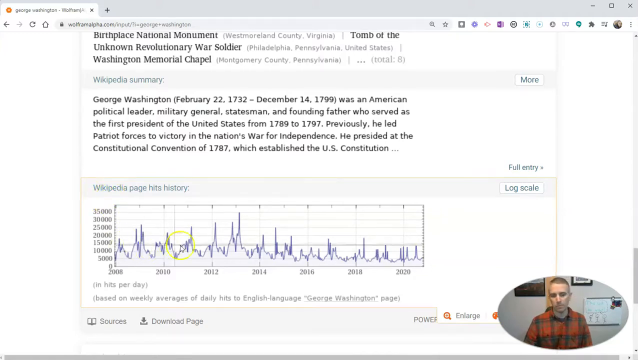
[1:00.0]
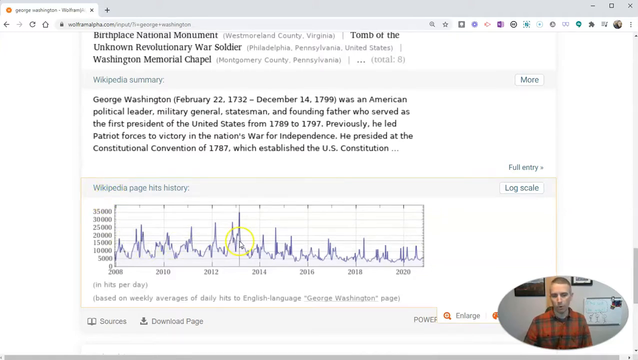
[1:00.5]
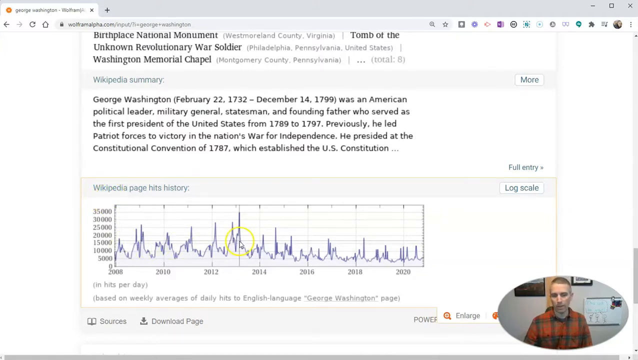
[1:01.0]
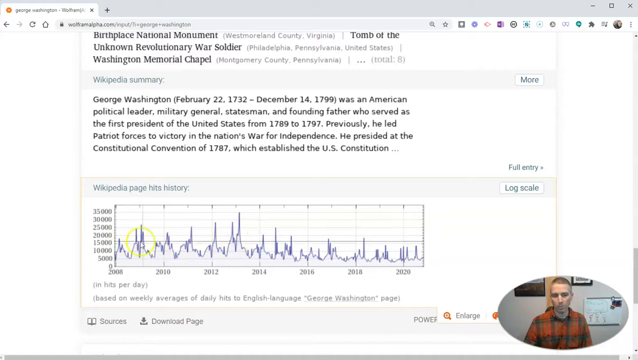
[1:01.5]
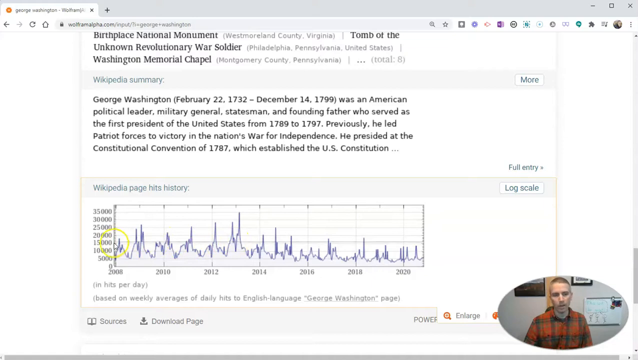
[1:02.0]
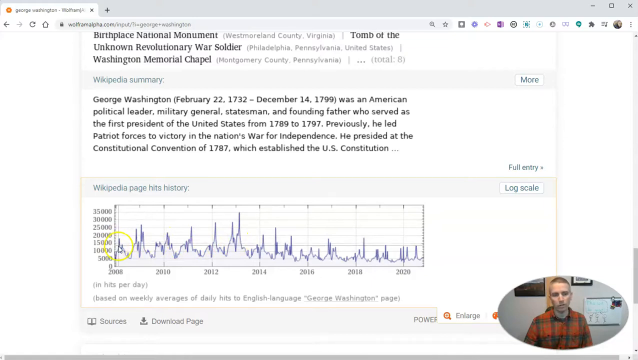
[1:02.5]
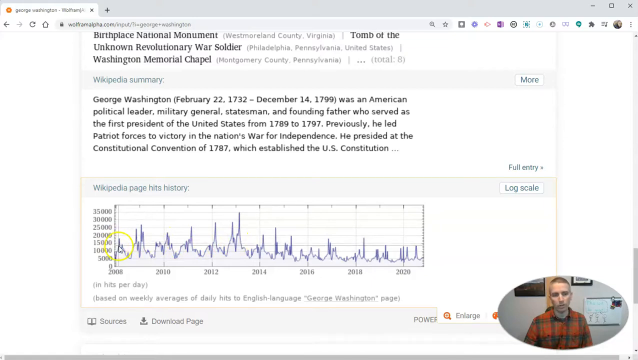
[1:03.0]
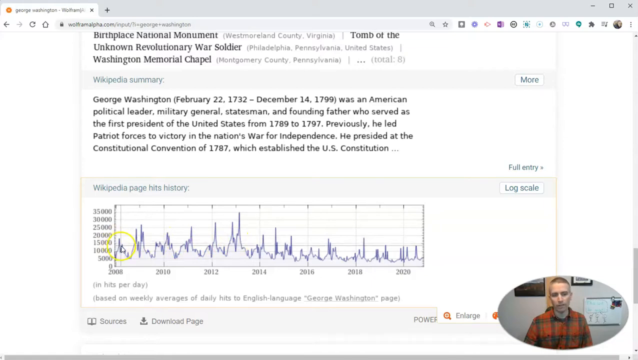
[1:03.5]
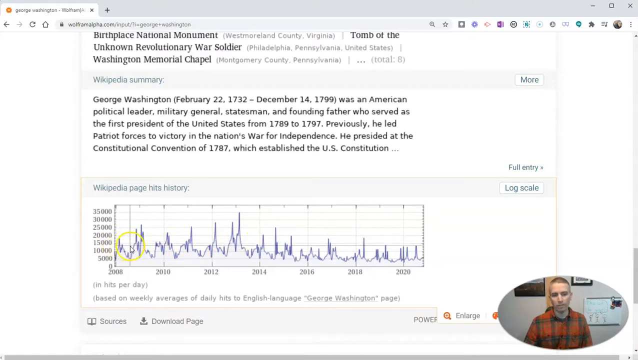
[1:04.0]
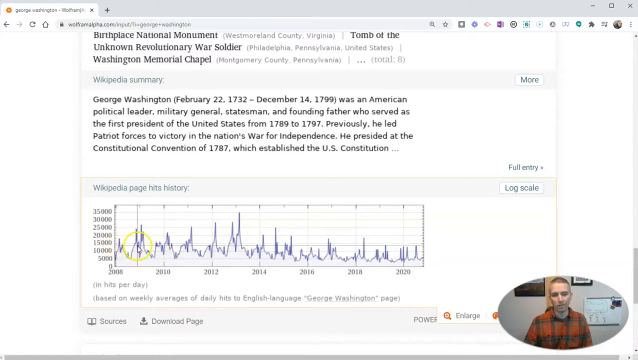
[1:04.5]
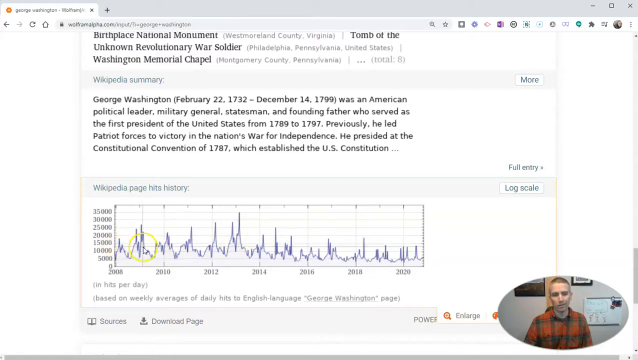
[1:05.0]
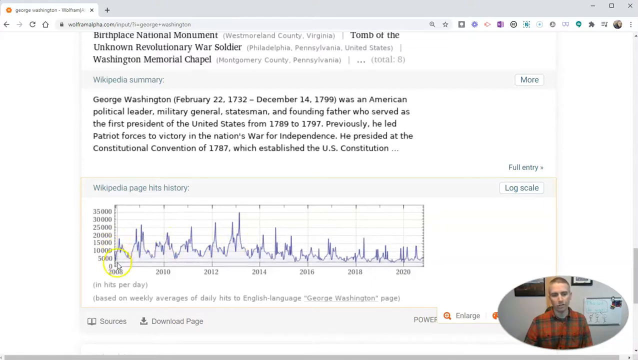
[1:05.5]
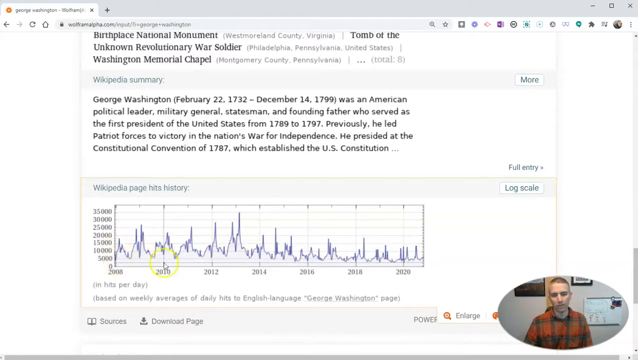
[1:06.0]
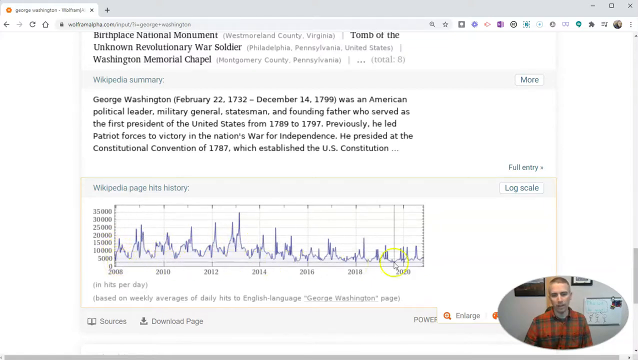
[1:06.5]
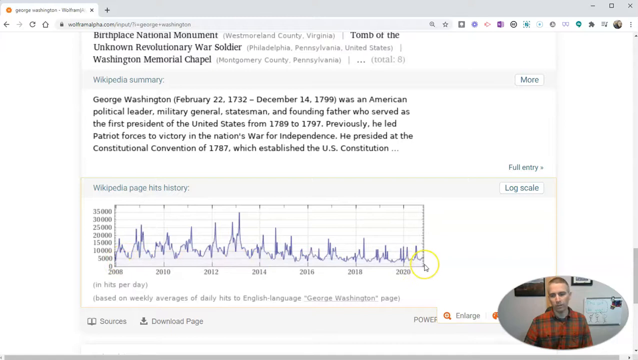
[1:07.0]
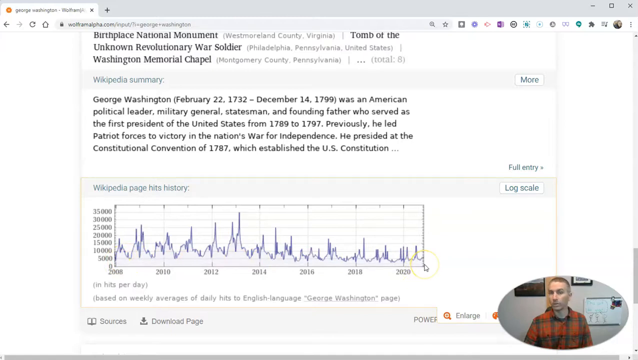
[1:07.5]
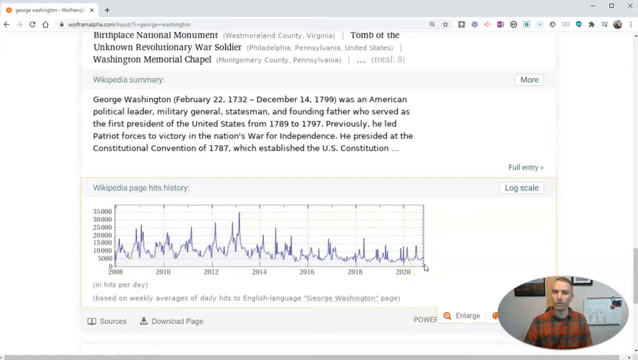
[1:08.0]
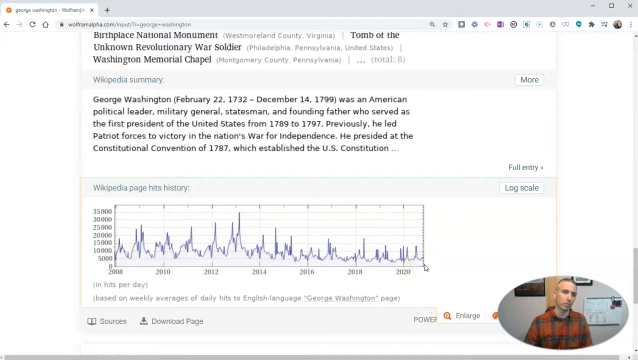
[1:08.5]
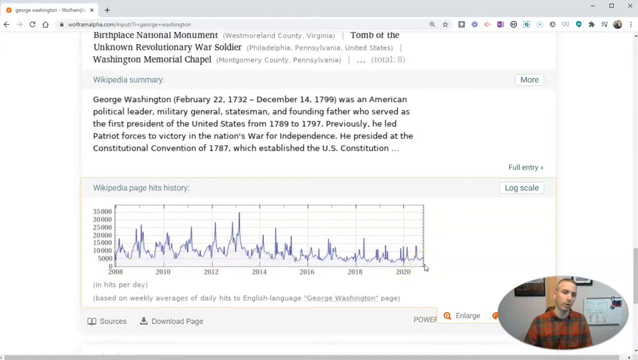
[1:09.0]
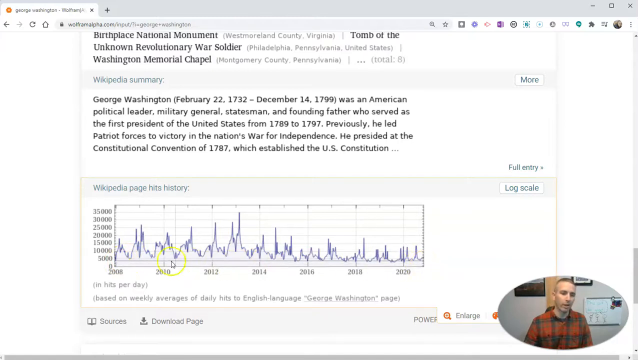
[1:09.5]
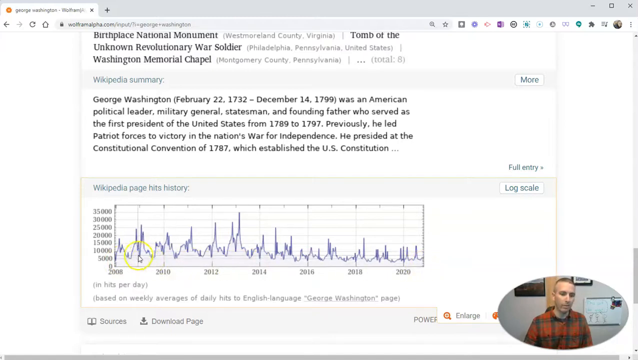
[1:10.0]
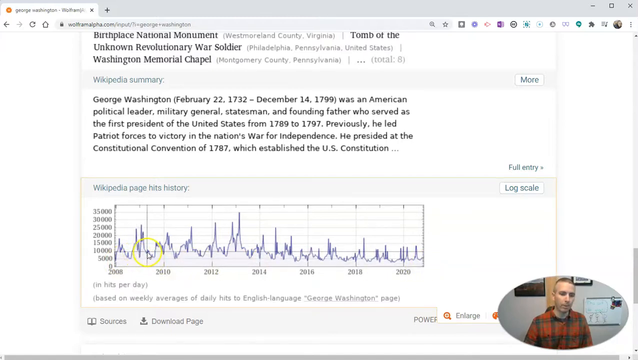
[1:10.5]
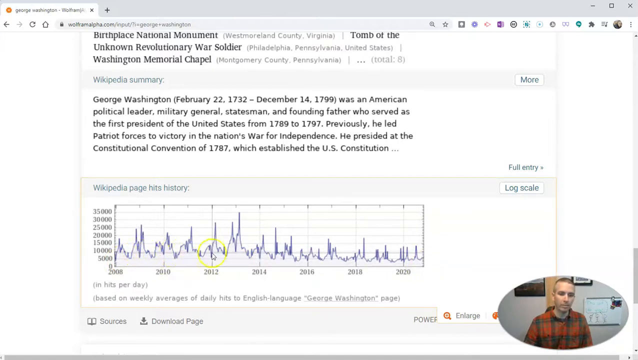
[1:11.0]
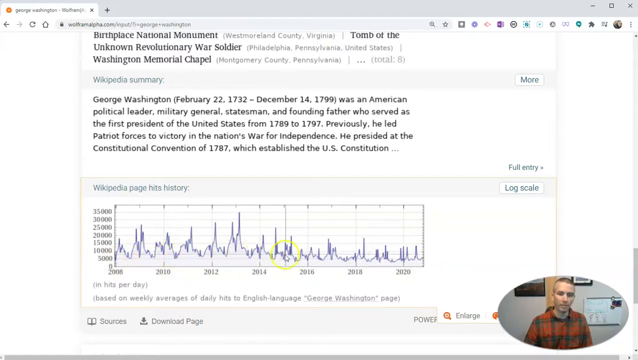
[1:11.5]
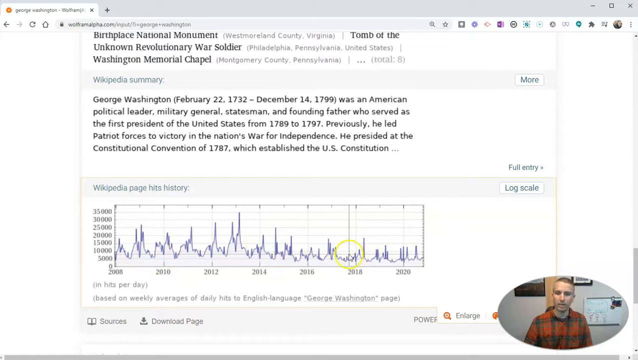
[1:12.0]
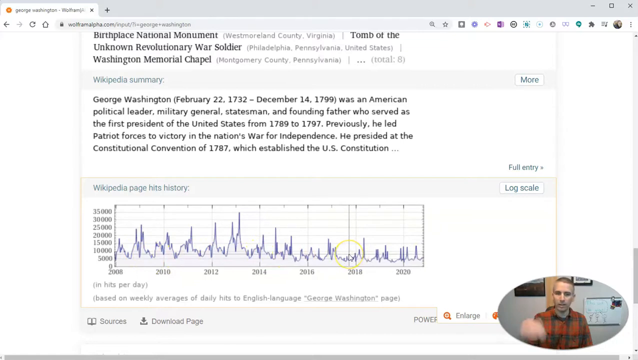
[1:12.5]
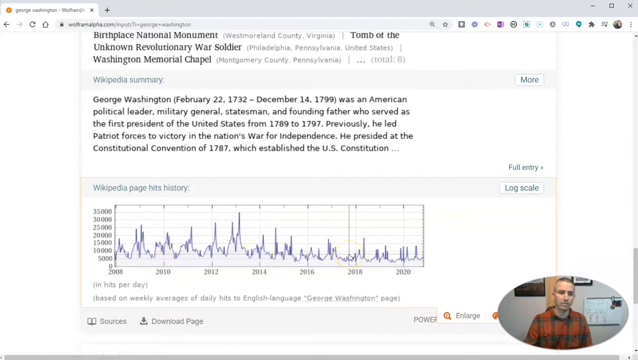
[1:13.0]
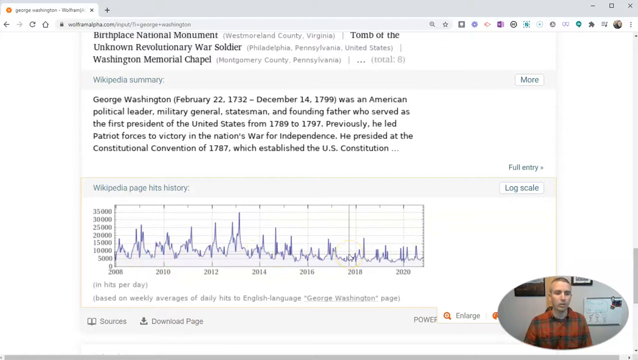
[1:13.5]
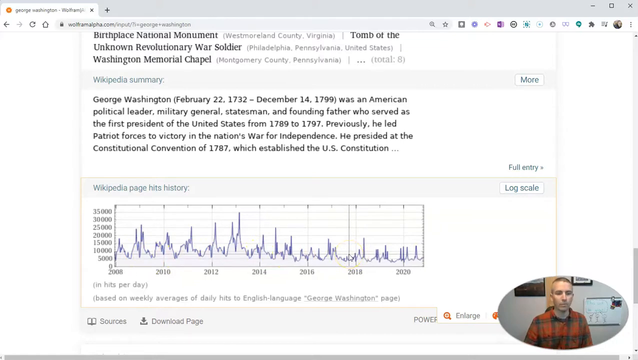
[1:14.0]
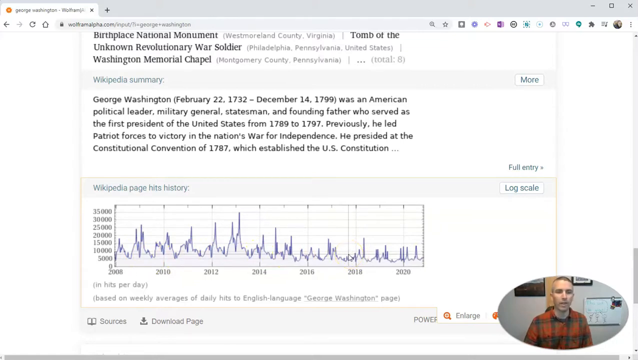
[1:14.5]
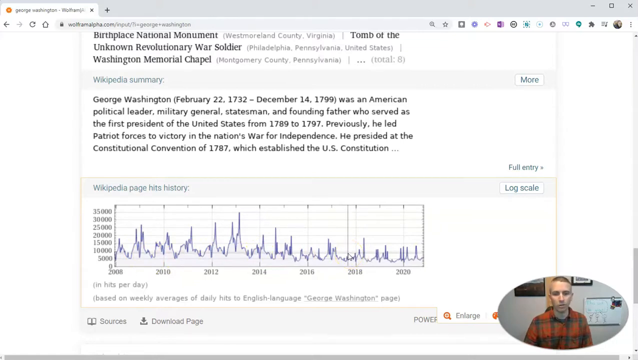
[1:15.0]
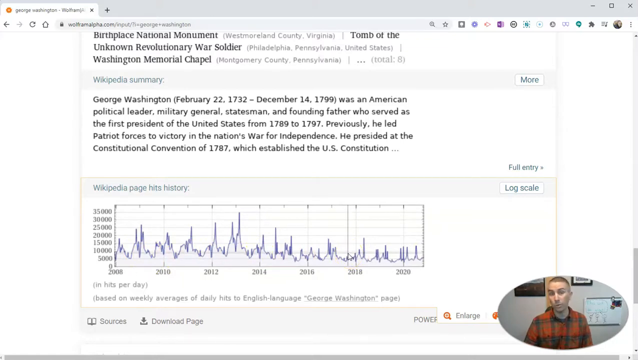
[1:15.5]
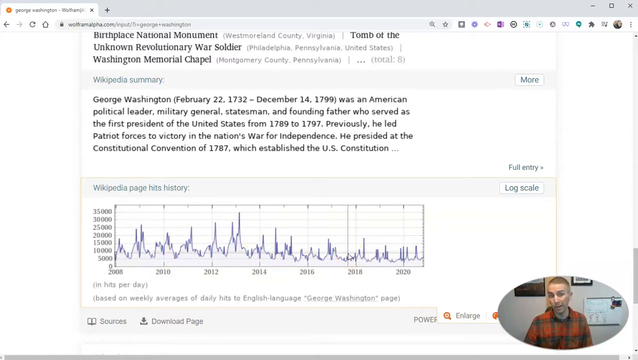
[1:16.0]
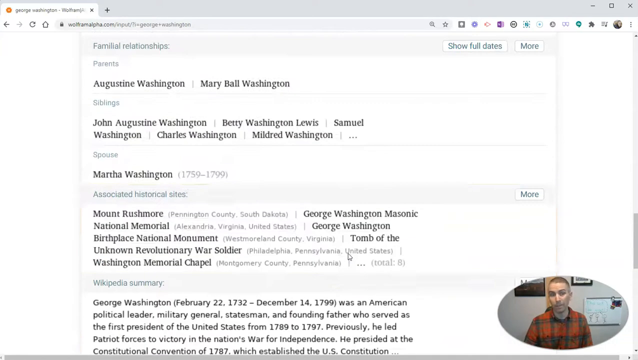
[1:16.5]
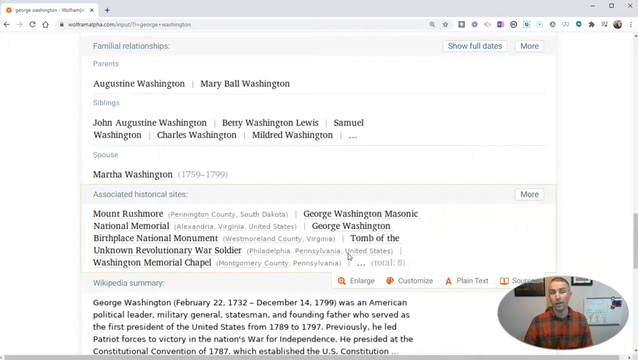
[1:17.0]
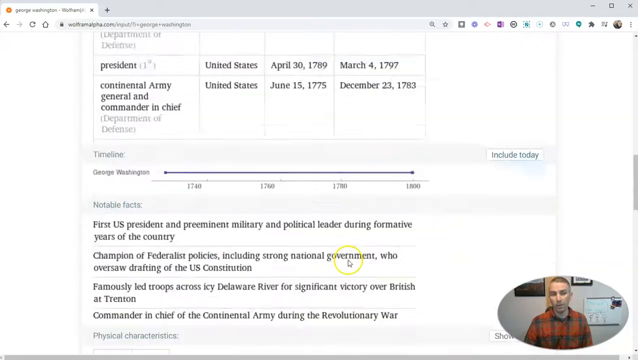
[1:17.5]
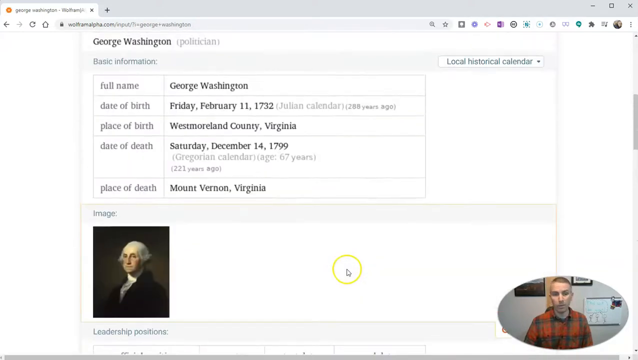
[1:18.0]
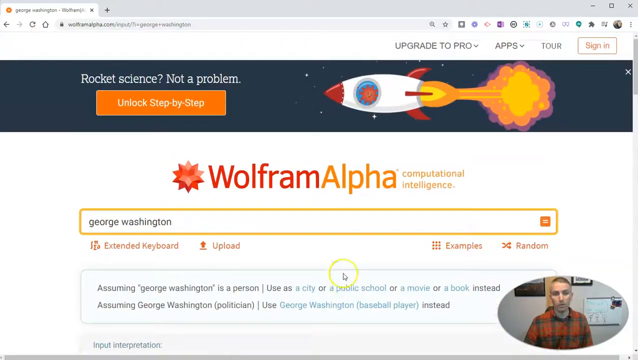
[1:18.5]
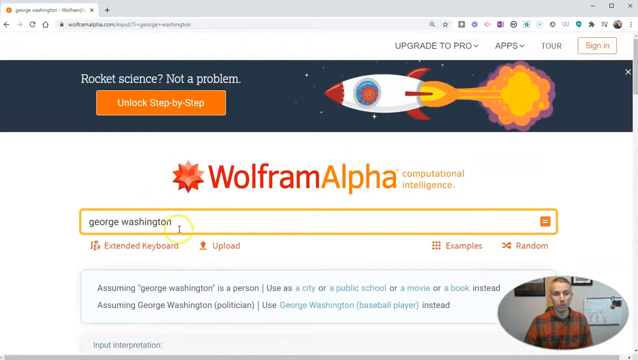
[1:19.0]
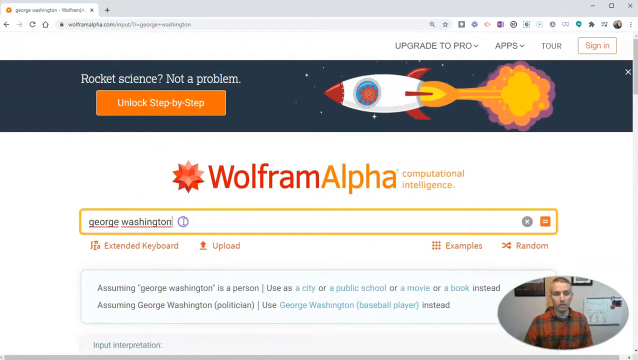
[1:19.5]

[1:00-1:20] After clicking a Wikipedia link, the user is on the Wikipedia page hits history section for George Washington on the Wolfram Alpha website. The mouse cursor moves slowly across the chart from left to right, then right to left, back and forth several times. Eventually the user scrolls up to the top of the page and clicks inside the search box again, apparently about to start a new search.